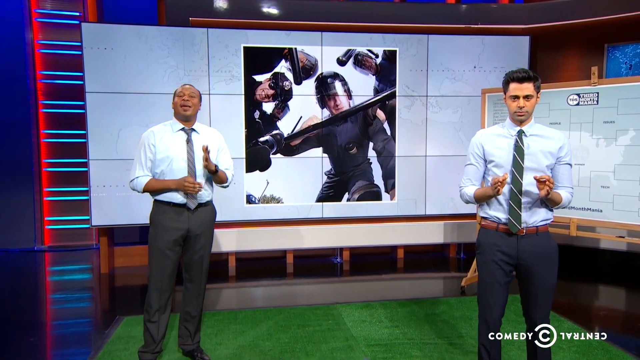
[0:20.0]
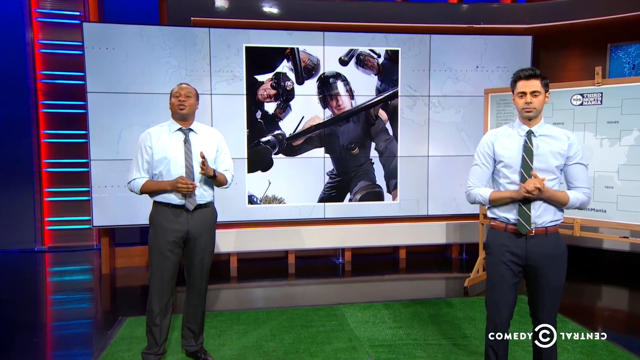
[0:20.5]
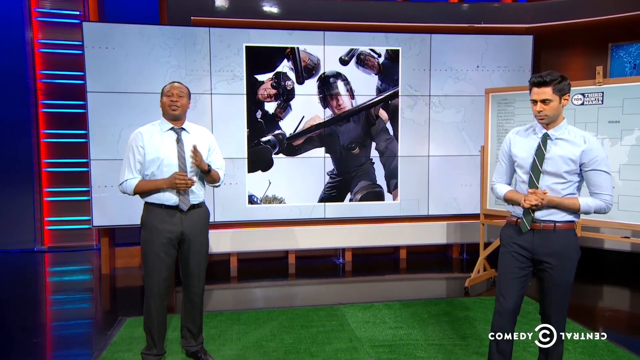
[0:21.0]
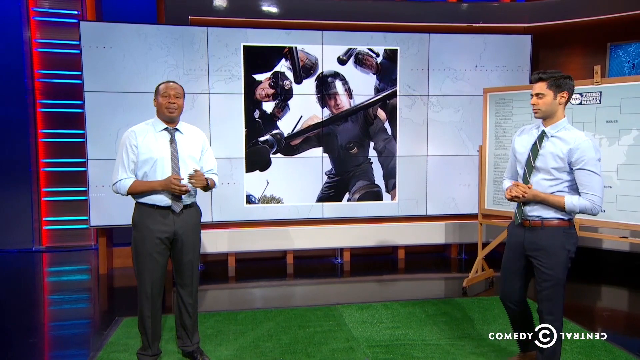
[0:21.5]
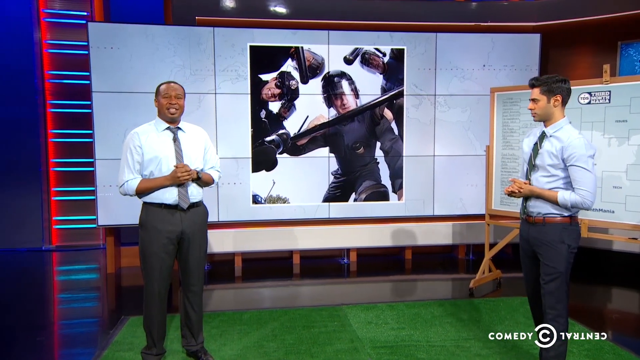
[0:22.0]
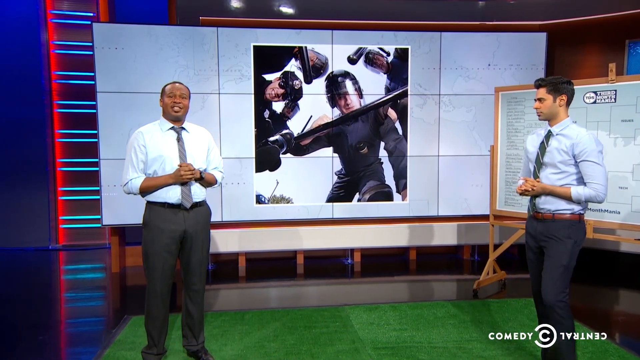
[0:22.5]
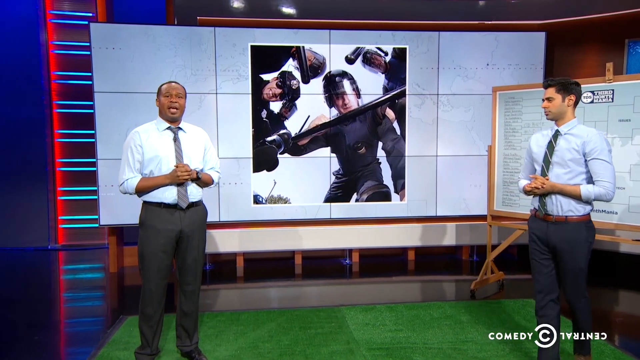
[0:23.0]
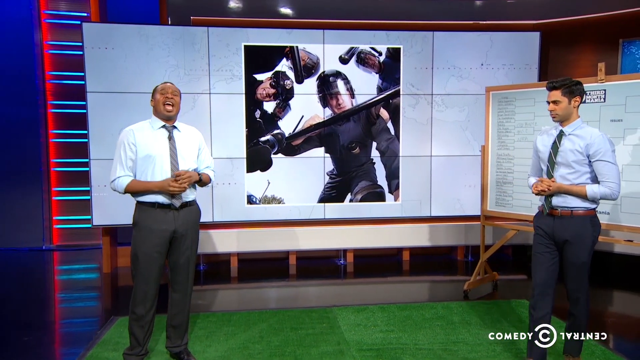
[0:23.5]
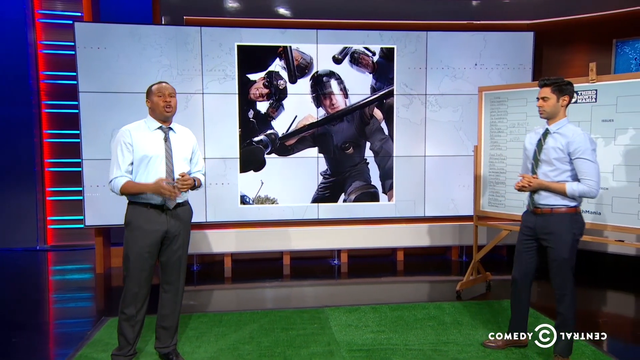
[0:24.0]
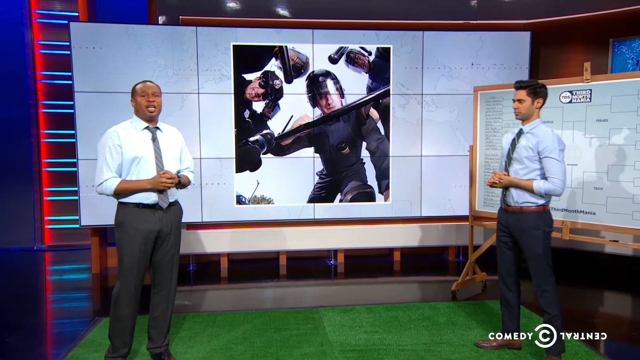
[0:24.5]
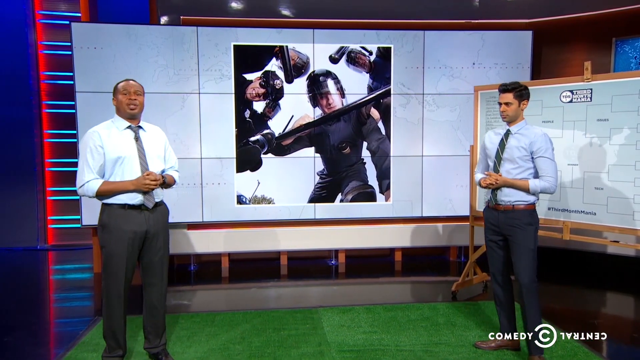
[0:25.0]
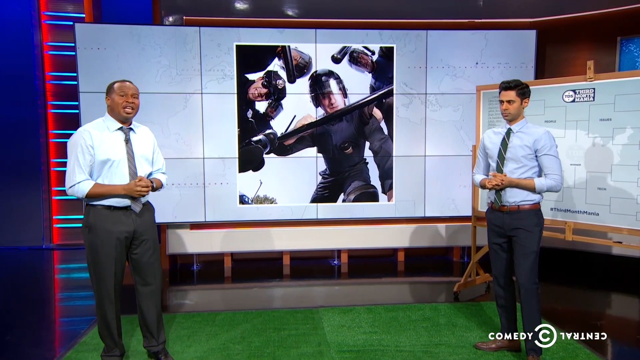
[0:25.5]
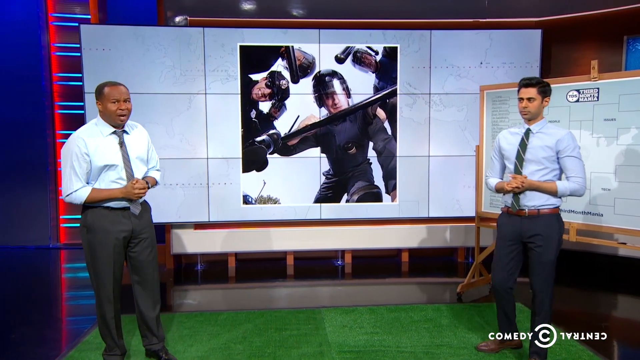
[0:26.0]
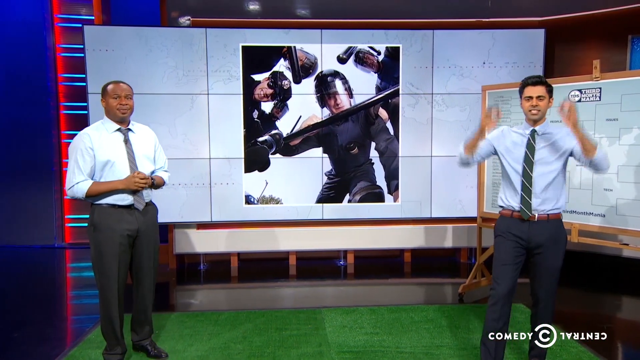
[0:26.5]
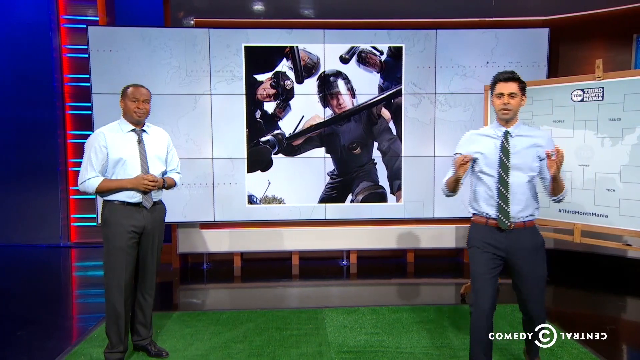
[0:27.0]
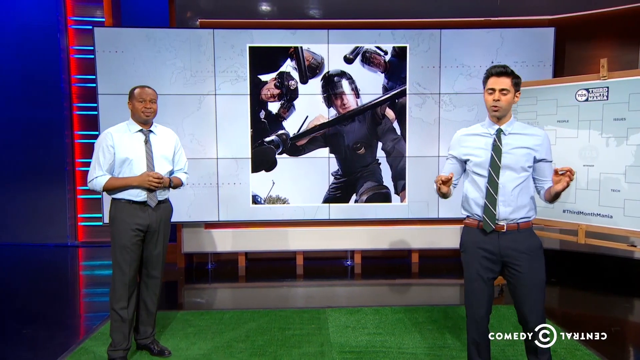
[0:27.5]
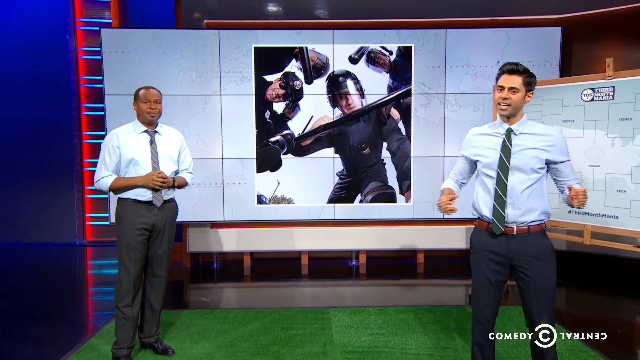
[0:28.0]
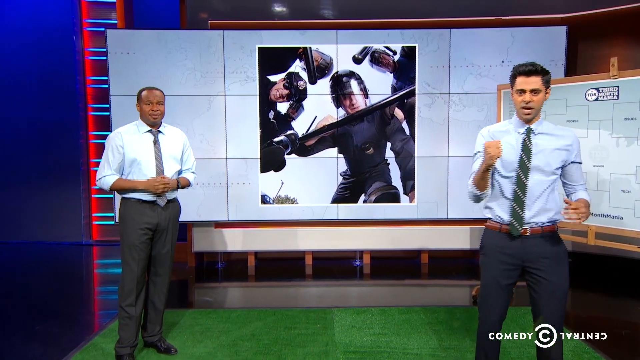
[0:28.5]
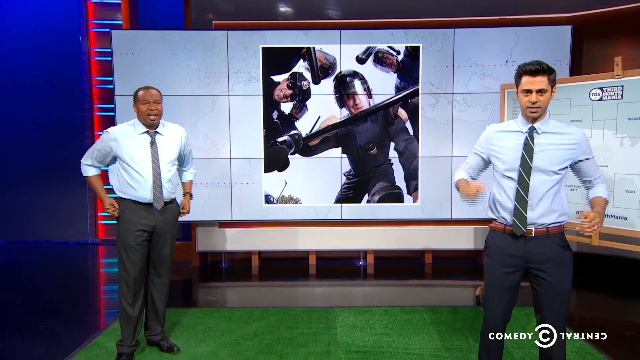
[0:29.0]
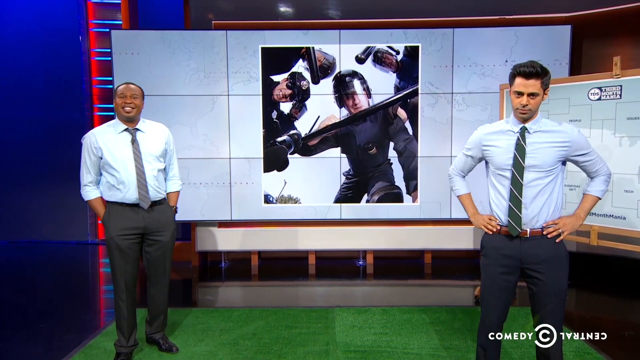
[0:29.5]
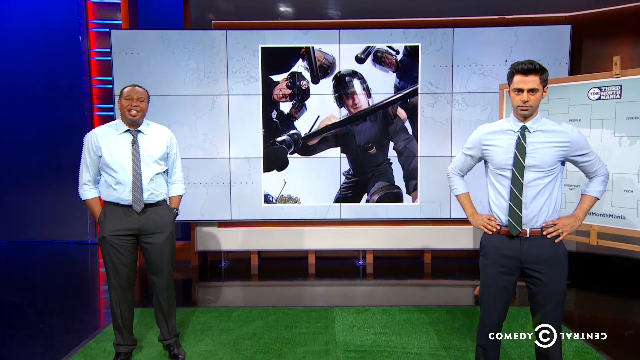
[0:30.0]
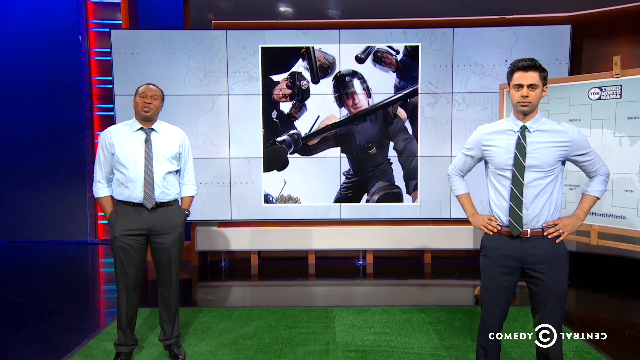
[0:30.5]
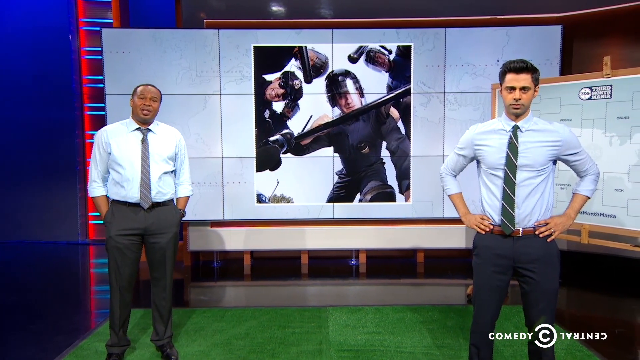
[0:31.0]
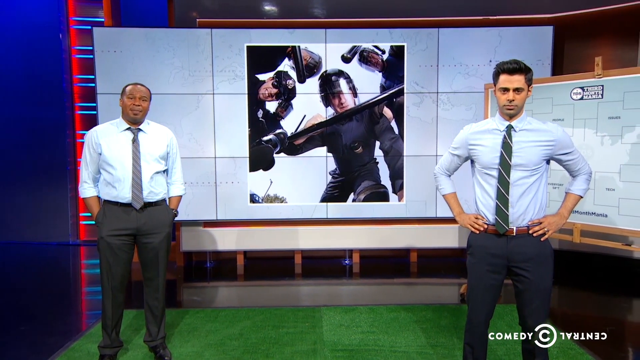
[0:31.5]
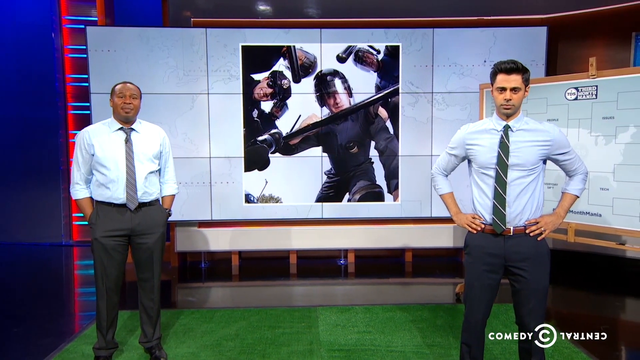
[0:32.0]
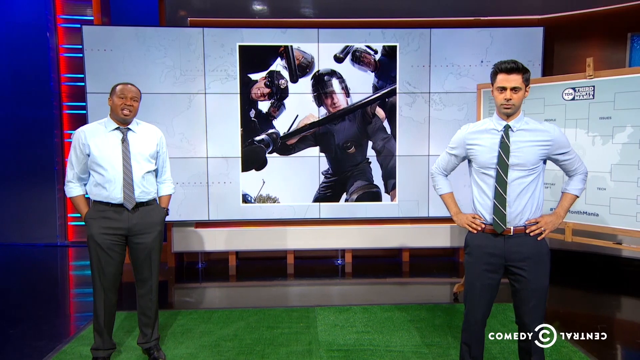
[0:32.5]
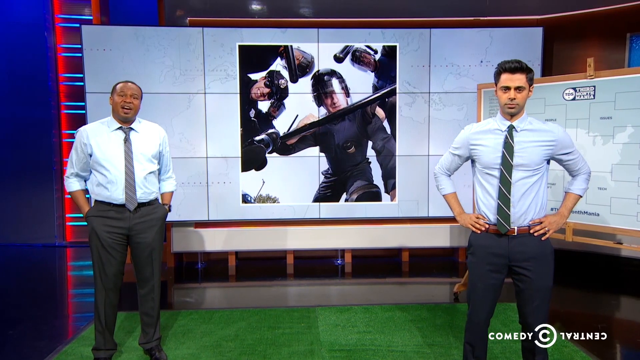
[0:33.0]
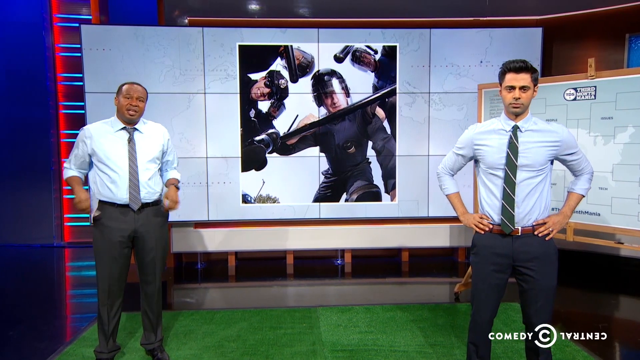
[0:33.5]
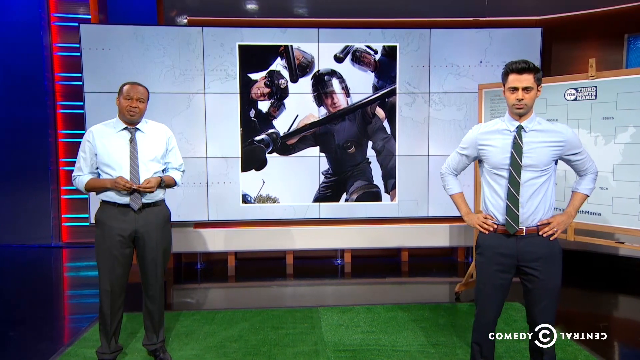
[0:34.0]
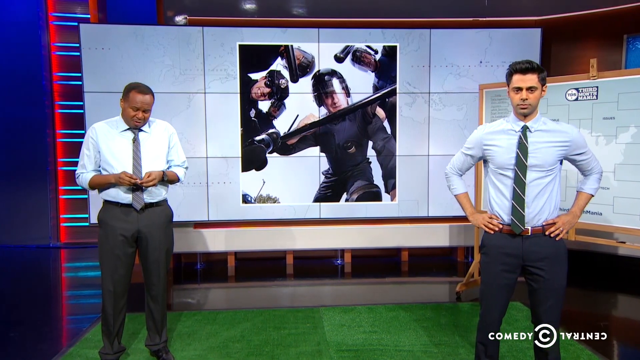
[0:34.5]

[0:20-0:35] In a studio, two men in suits speak back and forth. The screen at the back of the studio shows an image of four police officers in what seem to be black uniforms with their weapons. They appear to be kneeling down, trying to look at something, and the men are likely discussing this. In the background there is a blue-looking wall with red and small blue lights, and the set looks like a typical TV set. There is also a small patch of green turf and a wooden board in the background. The shot mostly features the two men. One apparently wears a light blue shirt with gray pants and black shoes. The other is also in a suit and has a brown belt buckle. Both are slim, look maybe in their 40s or 50s, are dressed similarly, and look like they are discussing a specific topic.